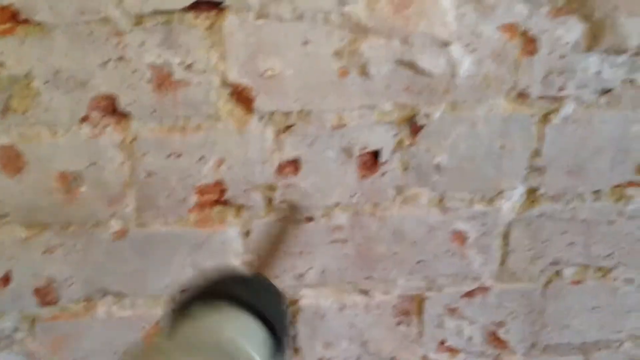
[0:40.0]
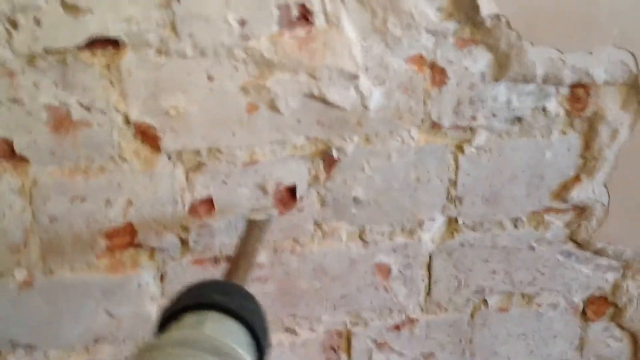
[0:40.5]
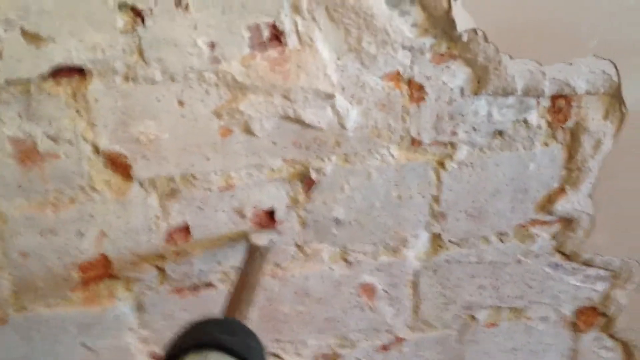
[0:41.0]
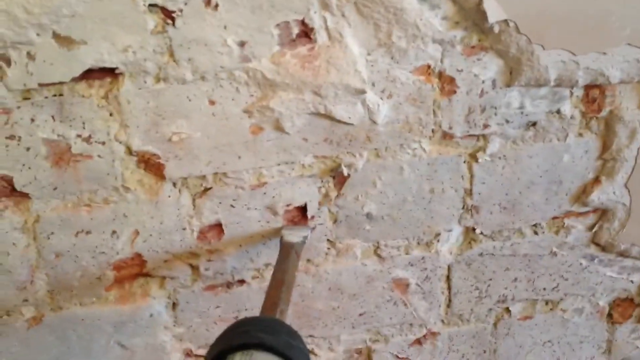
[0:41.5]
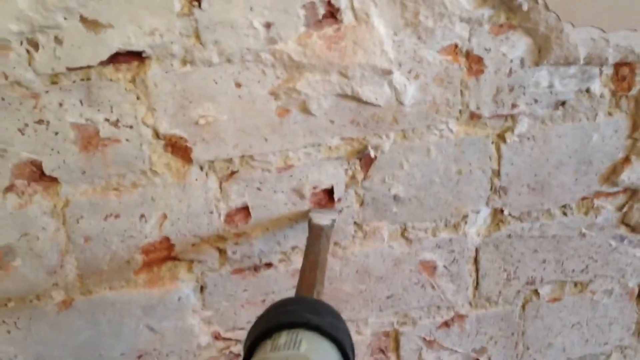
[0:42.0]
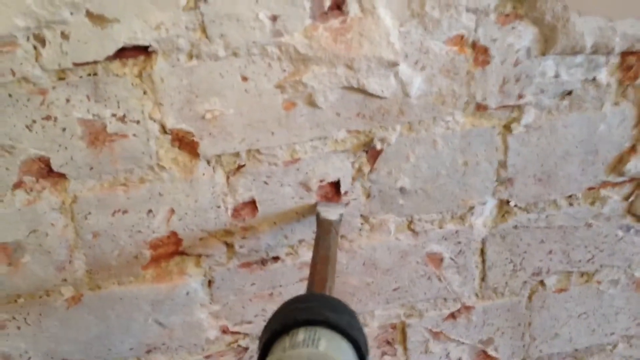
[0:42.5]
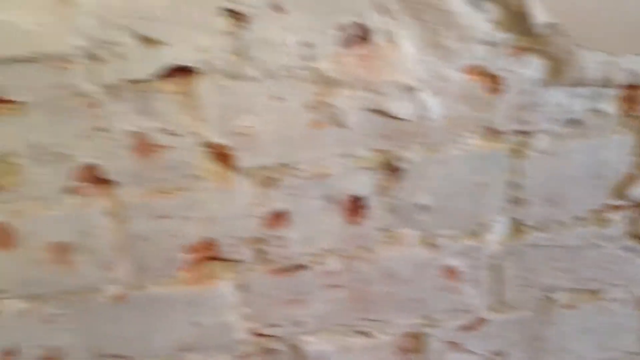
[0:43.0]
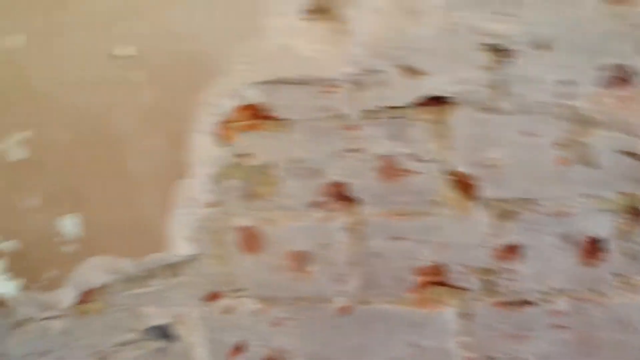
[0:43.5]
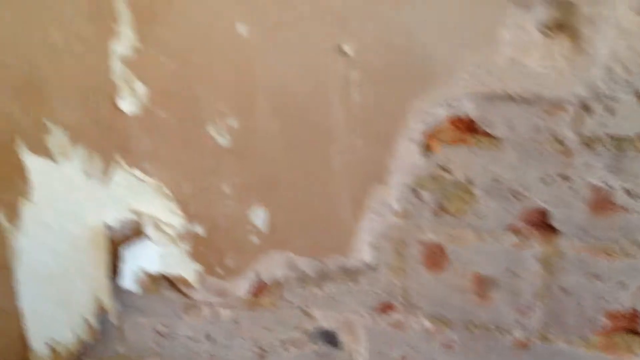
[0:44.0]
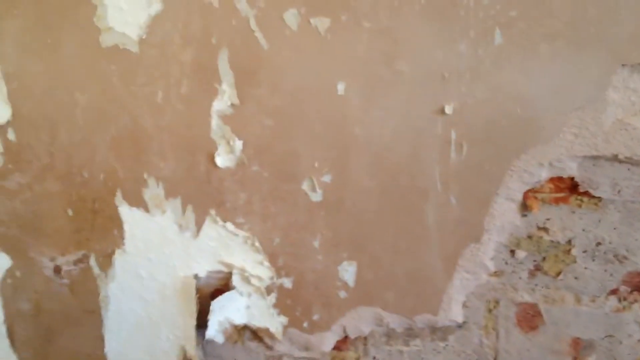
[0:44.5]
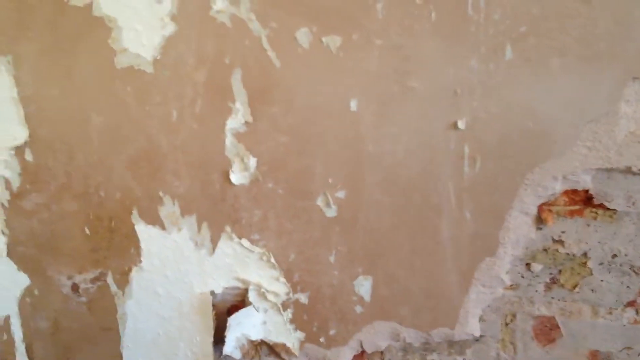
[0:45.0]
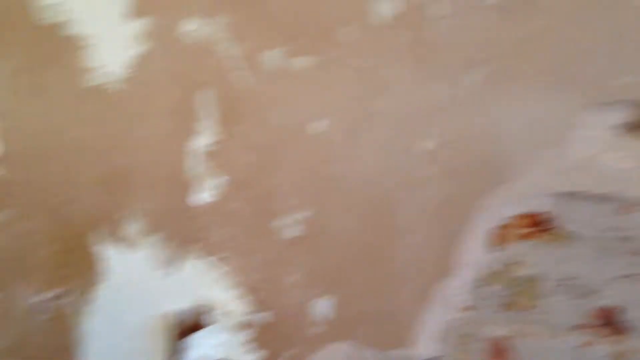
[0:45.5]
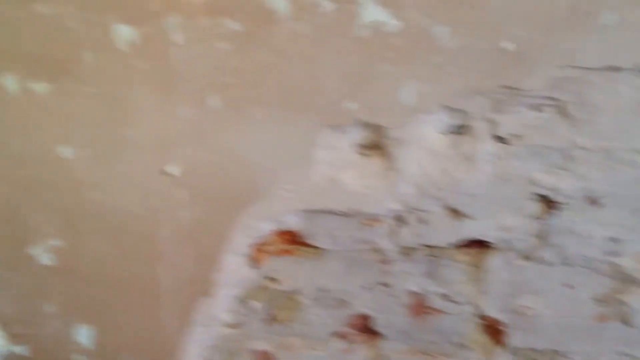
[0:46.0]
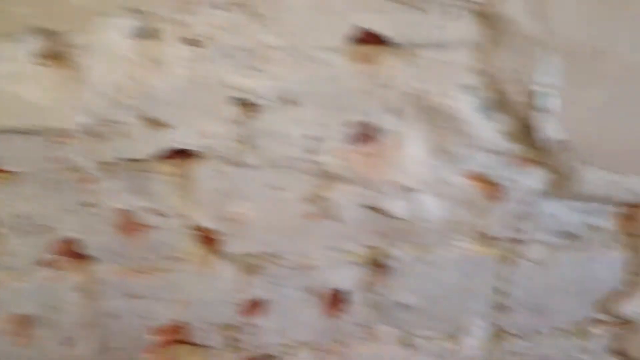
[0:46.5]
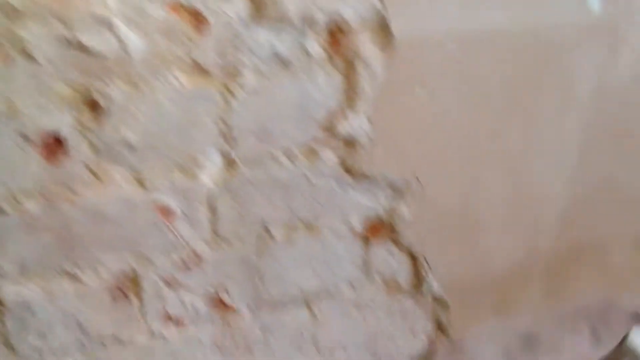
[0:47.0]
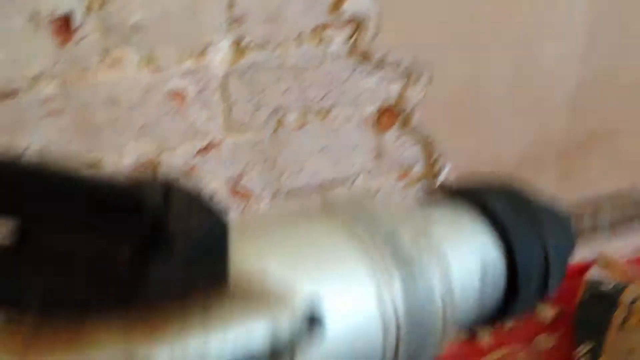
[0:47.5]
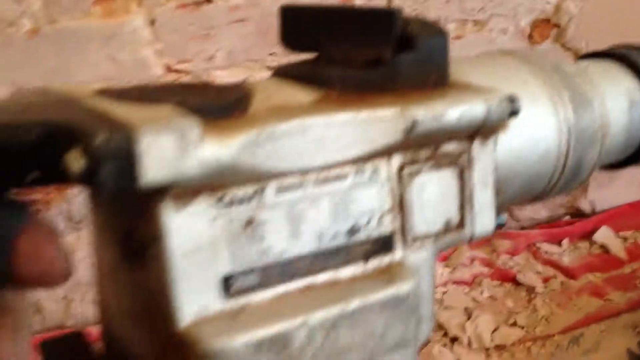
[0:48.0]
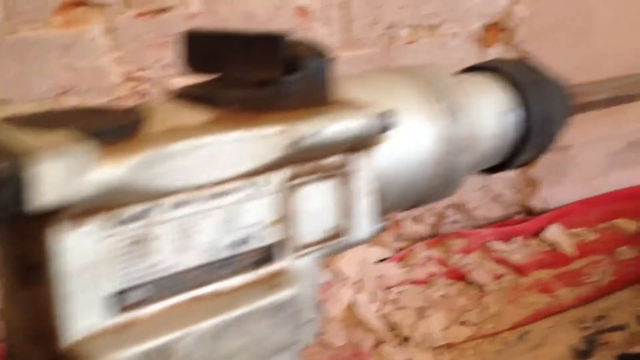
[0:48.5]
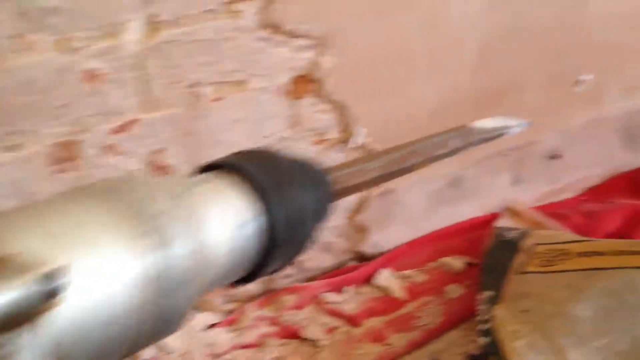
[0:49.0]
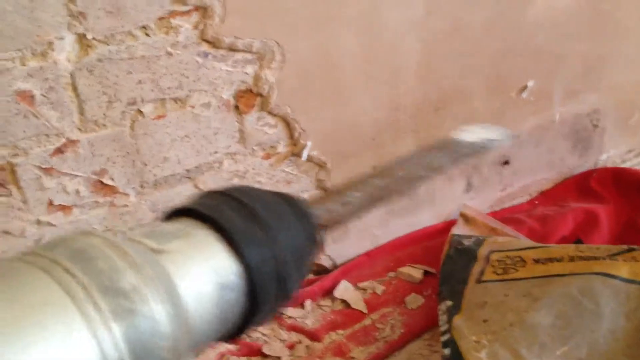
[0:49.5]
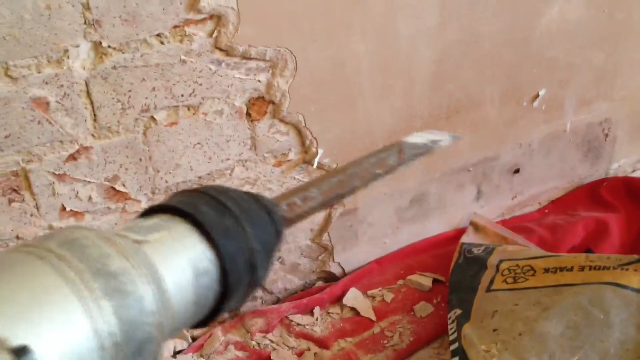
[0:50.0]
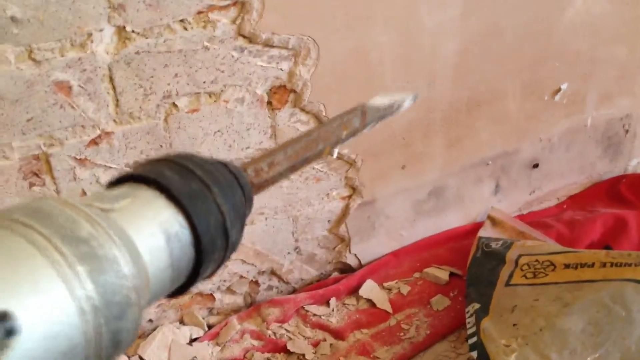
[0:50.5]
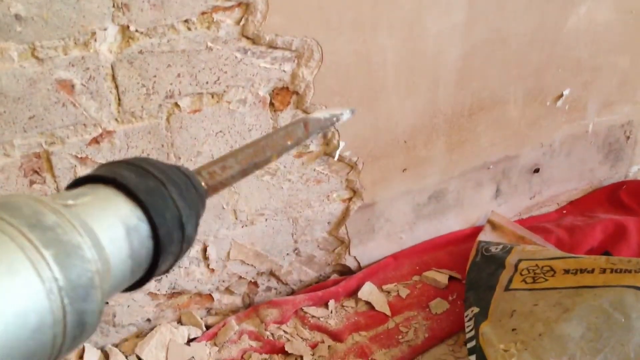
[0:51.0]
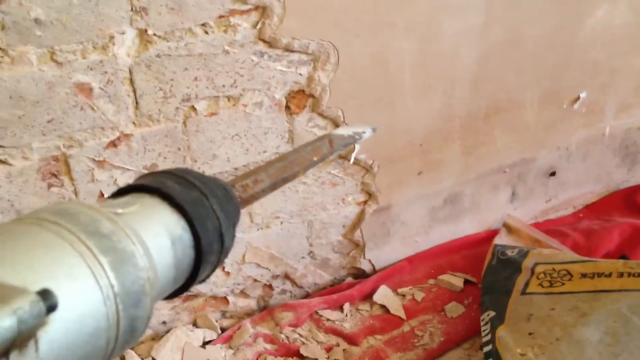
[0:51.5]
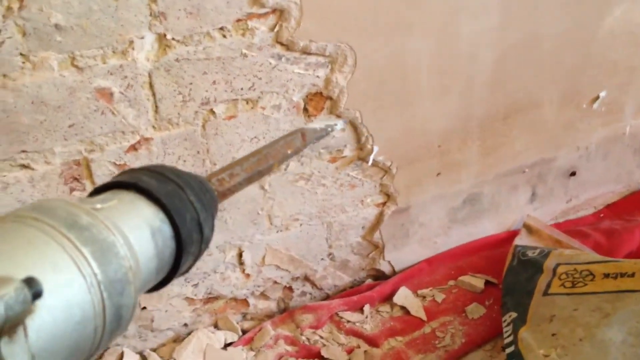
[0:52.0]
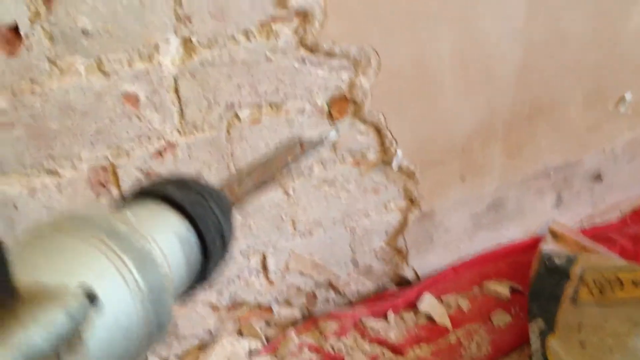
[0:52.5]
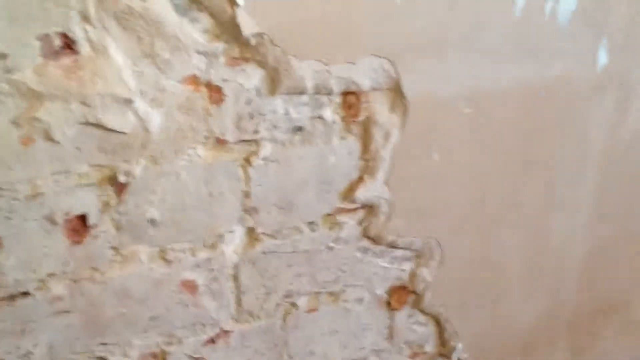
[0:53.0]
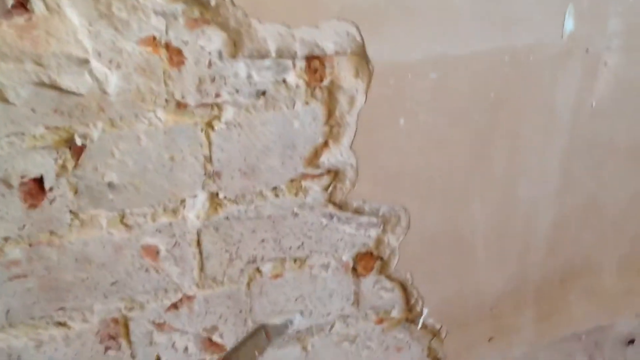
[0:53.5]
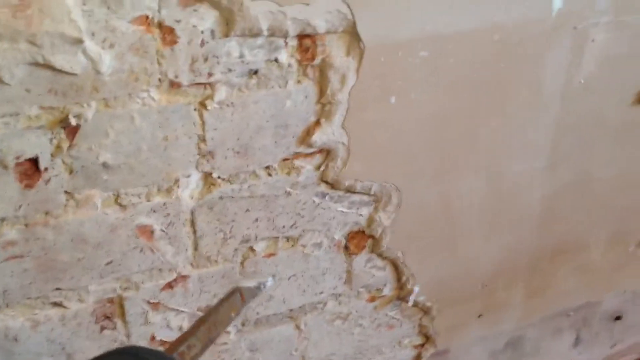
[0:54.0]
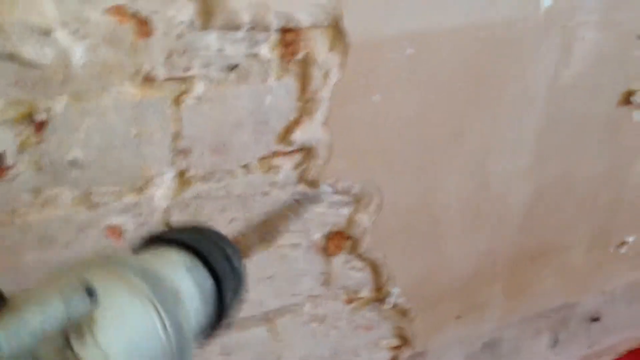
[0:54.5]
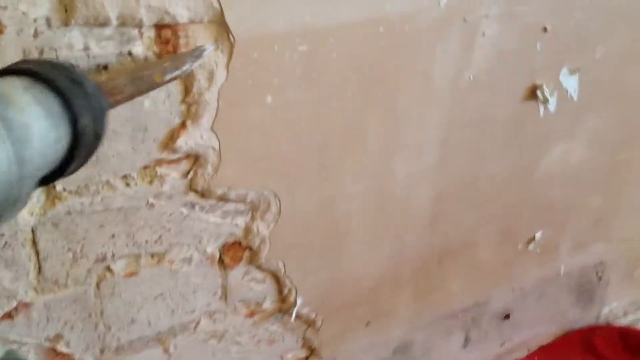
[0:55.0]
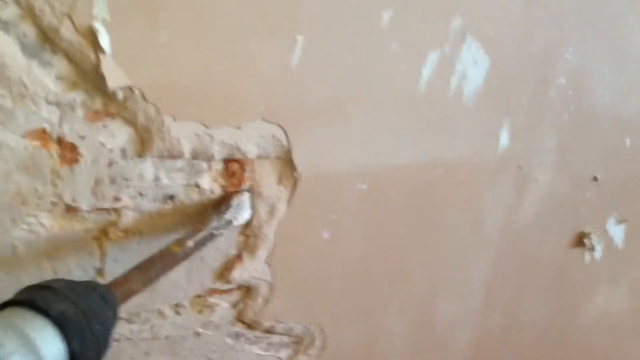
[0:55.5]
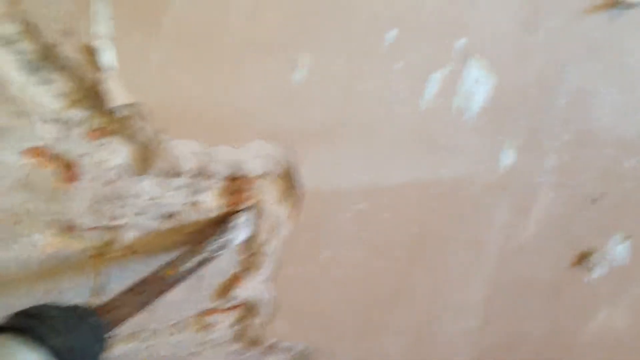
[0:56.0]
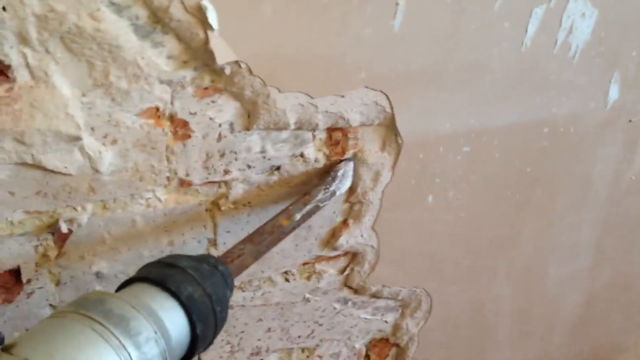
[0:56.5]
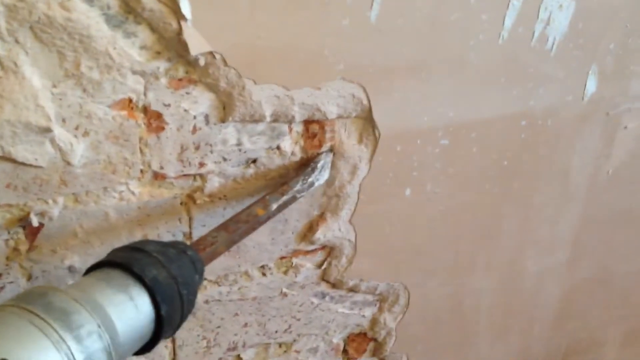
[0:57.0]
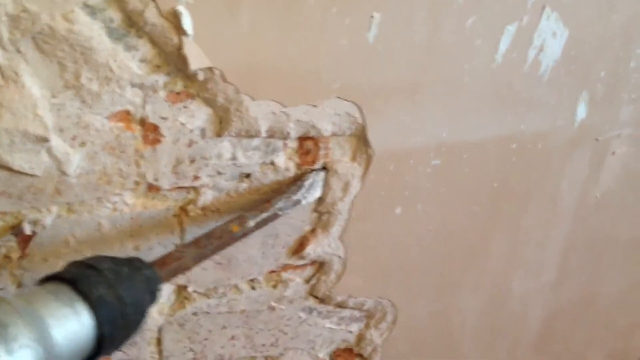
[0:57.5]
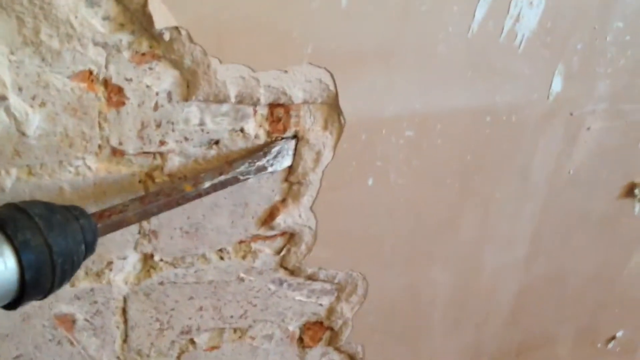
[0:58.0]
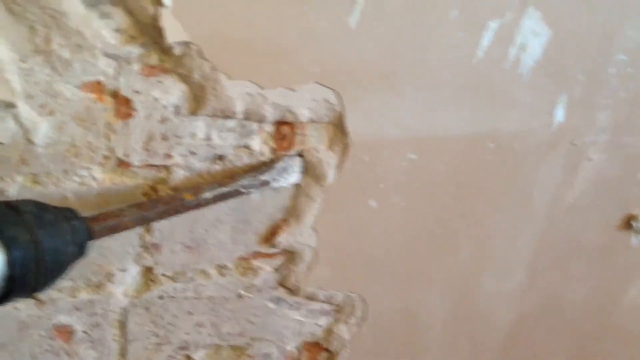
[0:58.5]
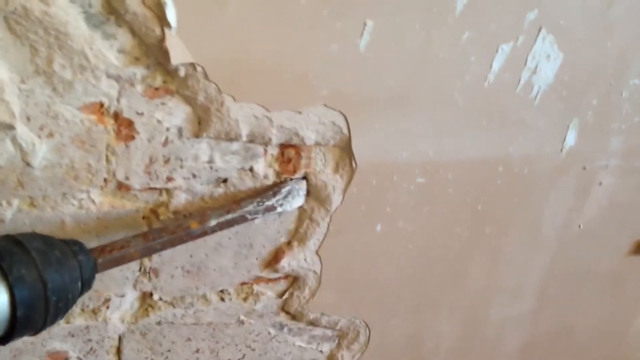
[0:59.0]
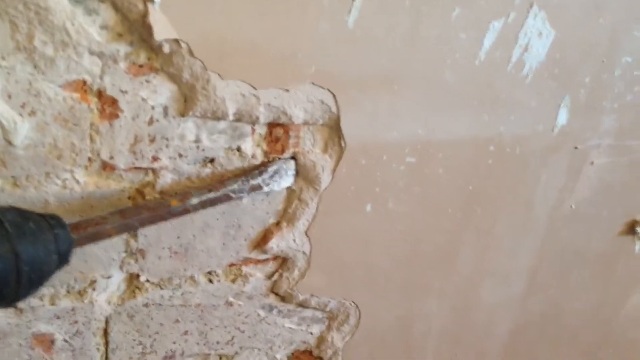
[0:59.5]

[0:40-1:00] A drill-like attachment is used to point toward parts of the wall. The wall is dotted with red and white stains, with cracking and plaster all over it. The footage is quite blurry as the camera pans around, then moves back to show the device held in the left hand of the video creator. It looks to be a pneumatic drill of some sort, quite large and long, with a flat metal tip connected to a silver cylinder shape that forms the body of the drill along with the drill motor. The camera pans back to the wall, where the drill tip is used to point at the coating. The drill is turned on briefly, and some chunks of the wall are chipped off, falling onto the ground at the bottom of the screen.